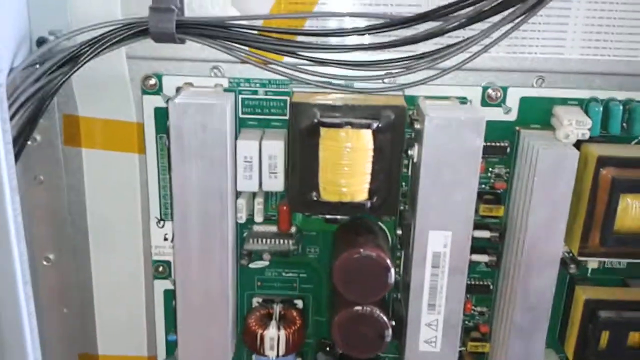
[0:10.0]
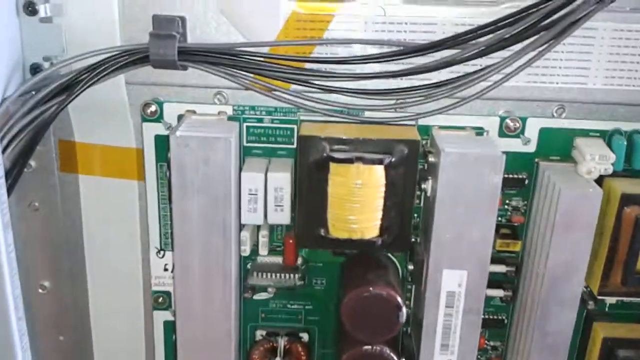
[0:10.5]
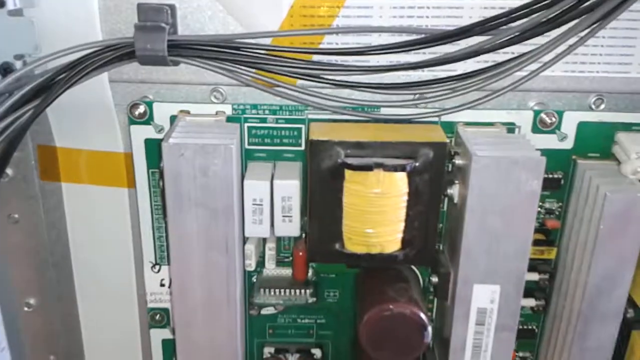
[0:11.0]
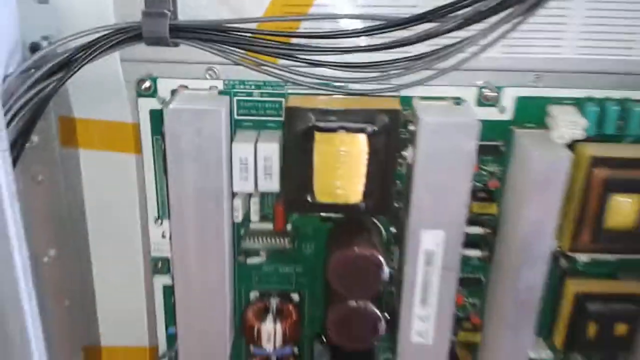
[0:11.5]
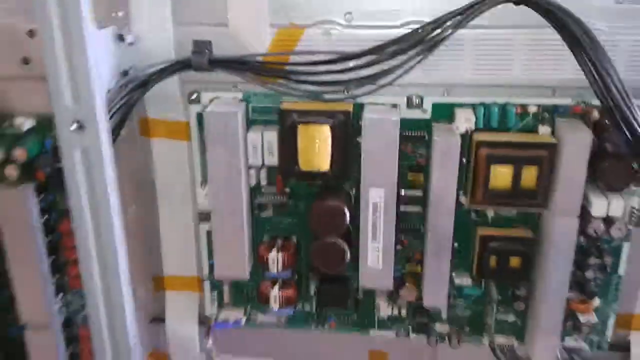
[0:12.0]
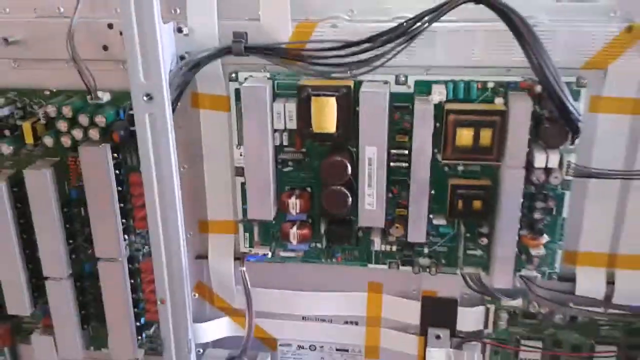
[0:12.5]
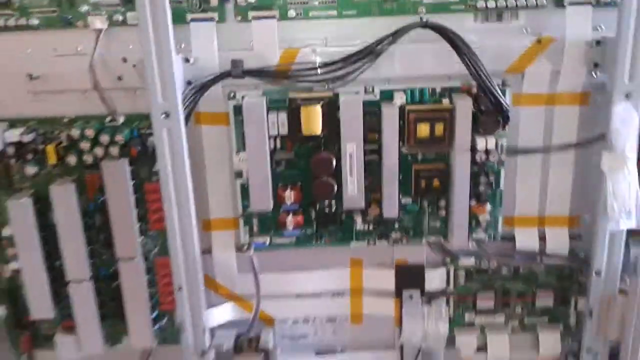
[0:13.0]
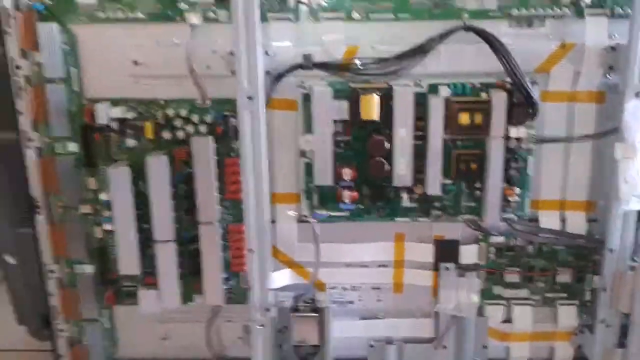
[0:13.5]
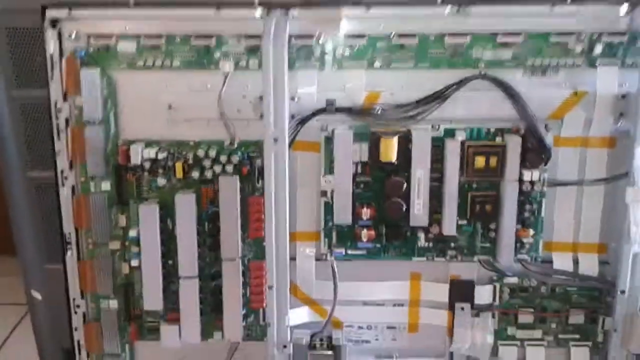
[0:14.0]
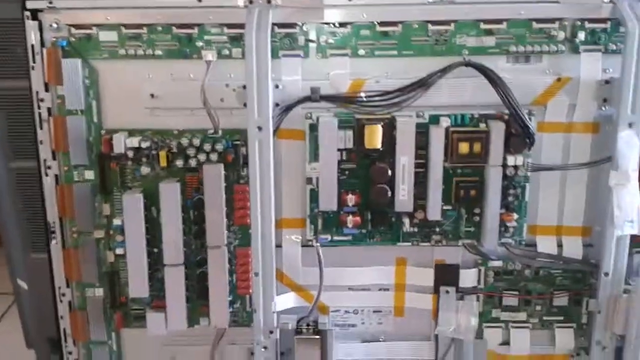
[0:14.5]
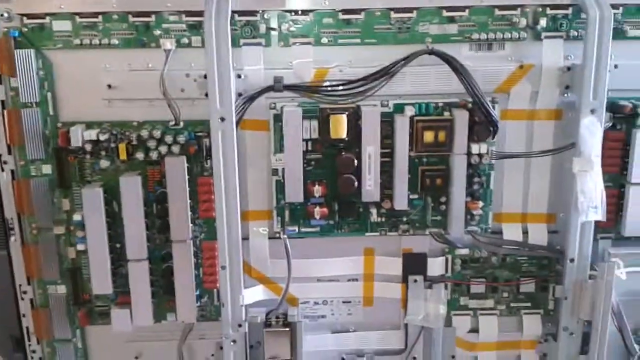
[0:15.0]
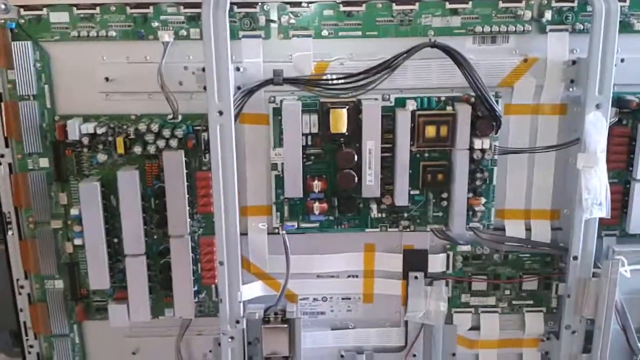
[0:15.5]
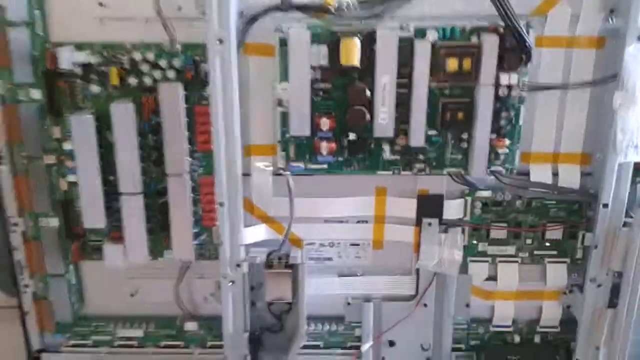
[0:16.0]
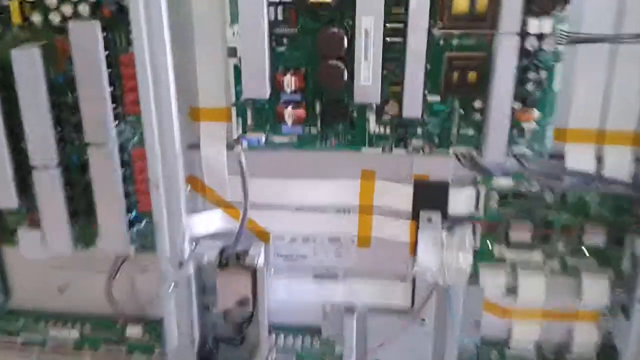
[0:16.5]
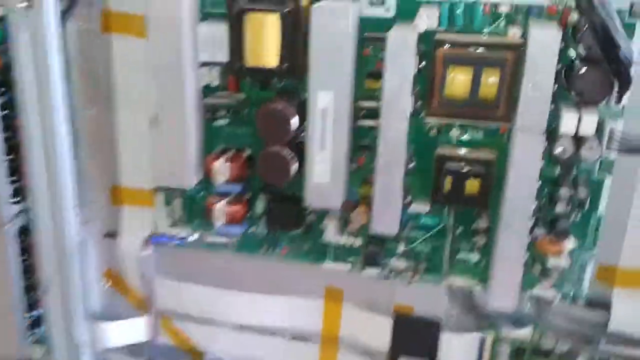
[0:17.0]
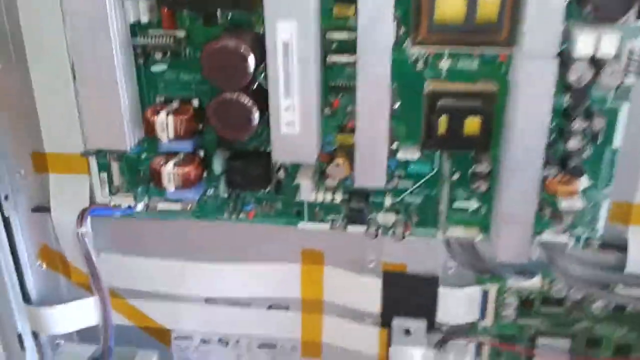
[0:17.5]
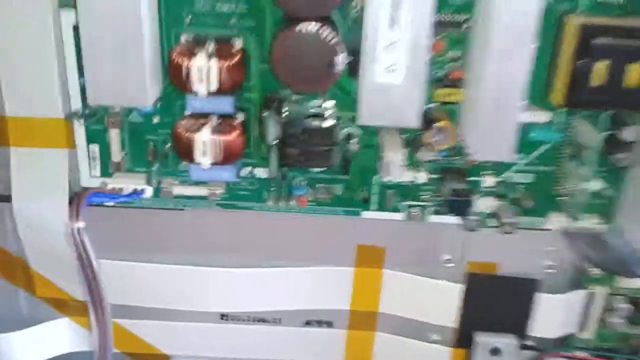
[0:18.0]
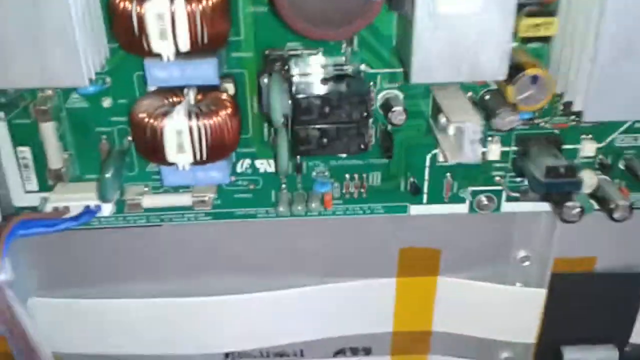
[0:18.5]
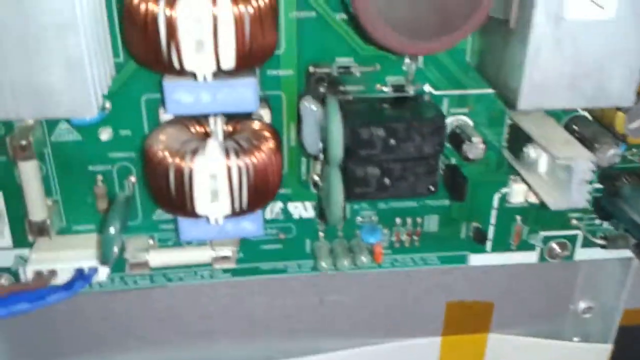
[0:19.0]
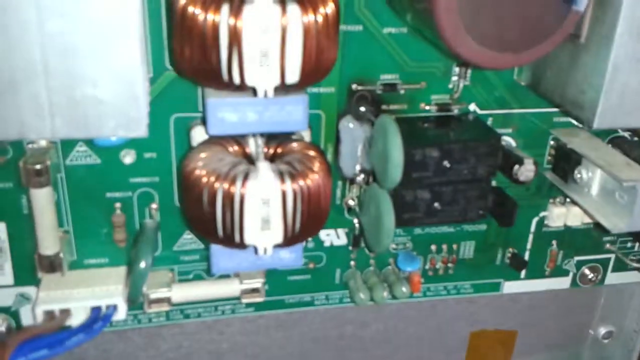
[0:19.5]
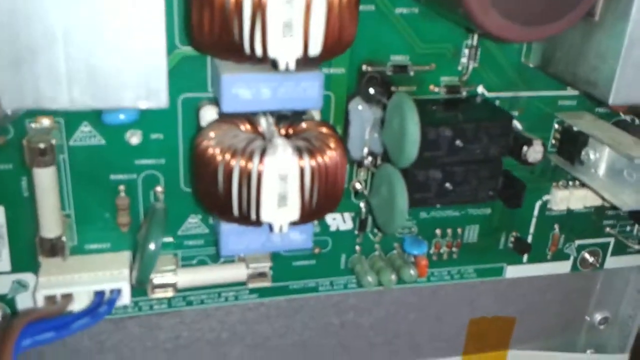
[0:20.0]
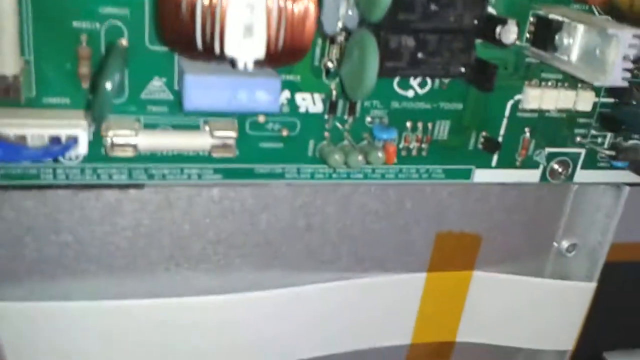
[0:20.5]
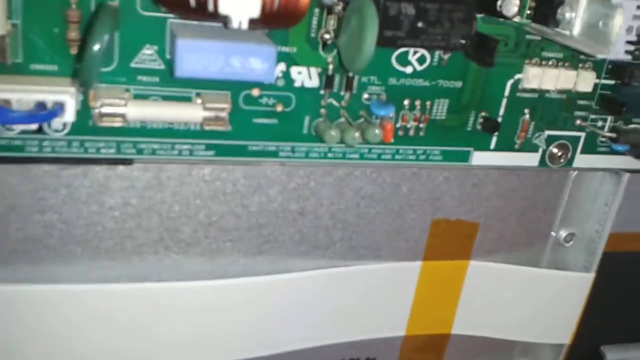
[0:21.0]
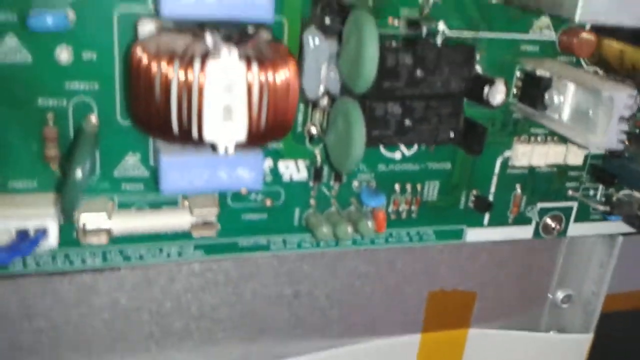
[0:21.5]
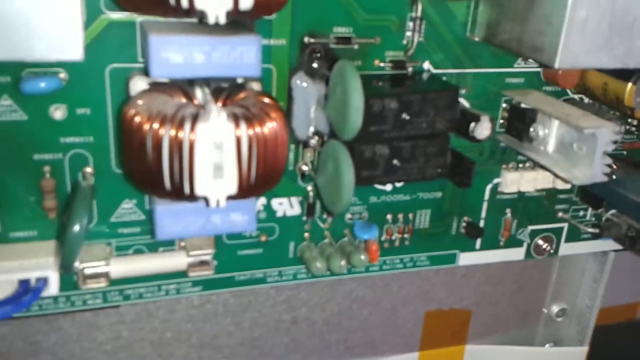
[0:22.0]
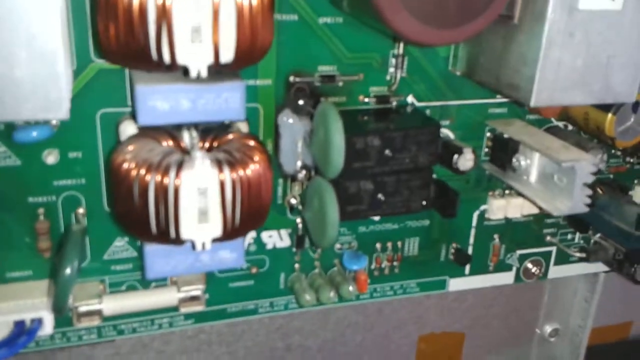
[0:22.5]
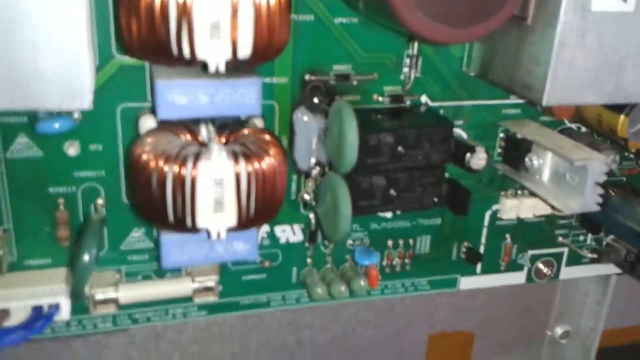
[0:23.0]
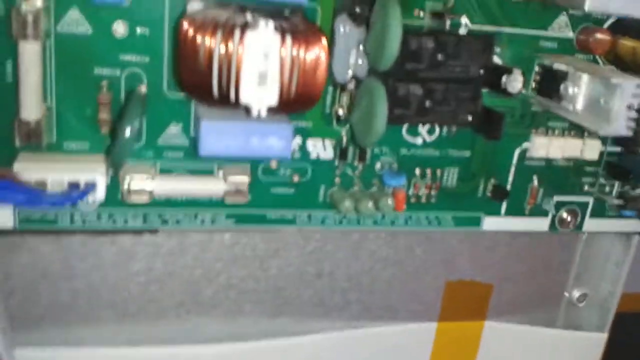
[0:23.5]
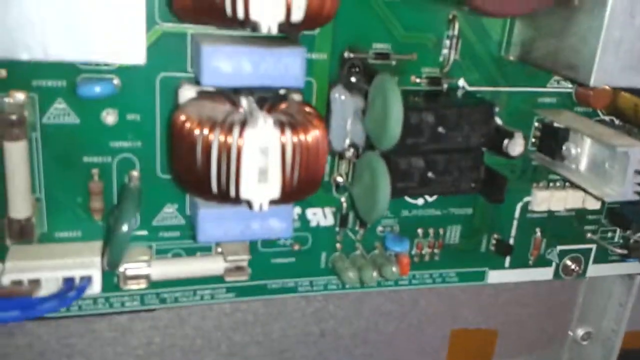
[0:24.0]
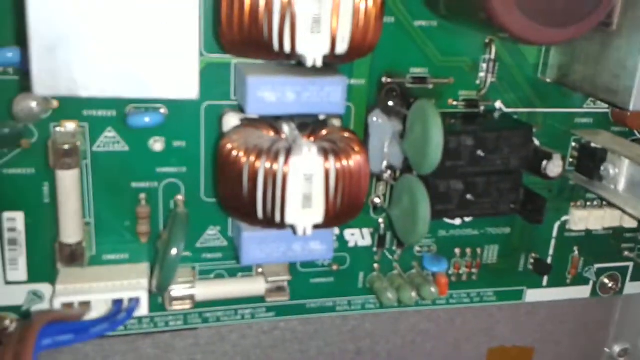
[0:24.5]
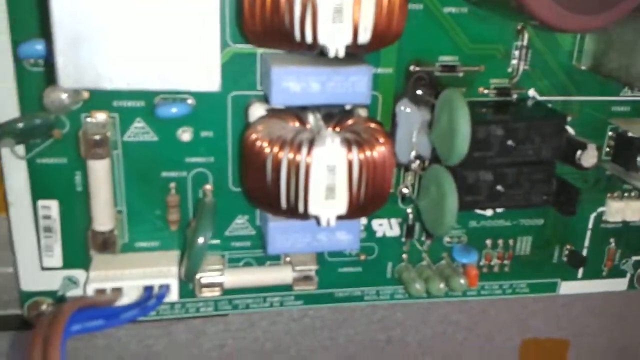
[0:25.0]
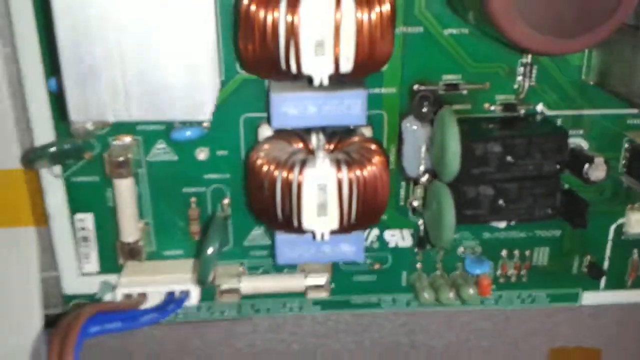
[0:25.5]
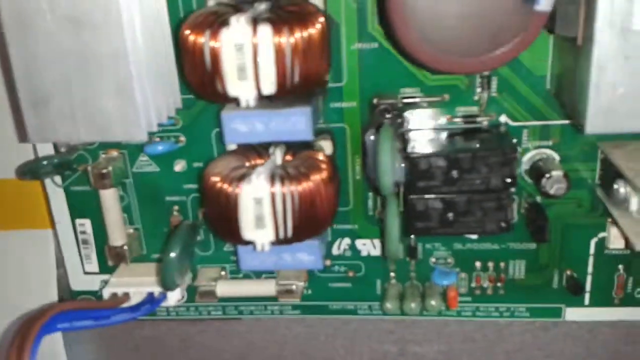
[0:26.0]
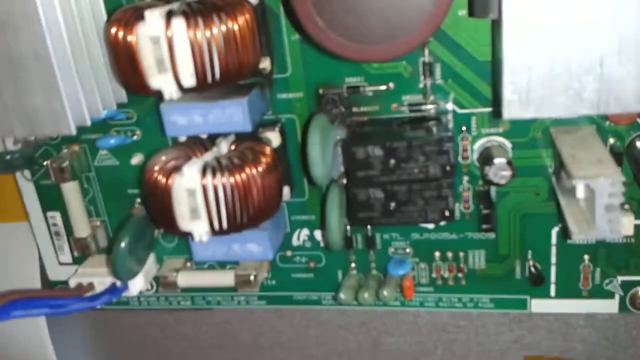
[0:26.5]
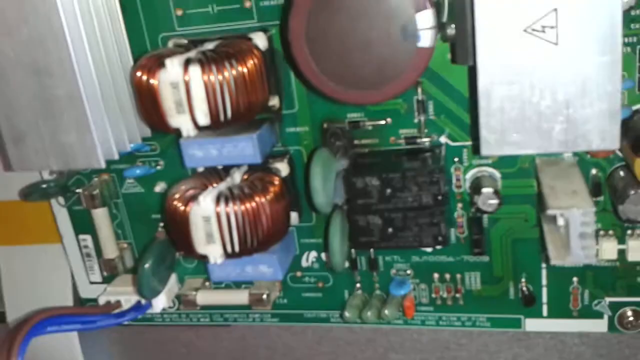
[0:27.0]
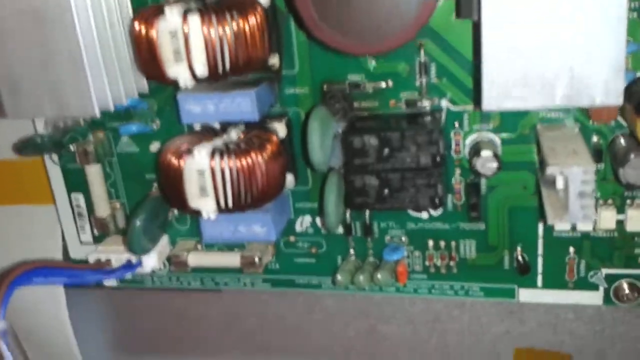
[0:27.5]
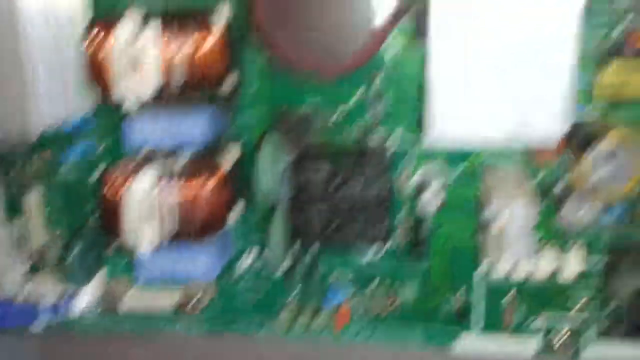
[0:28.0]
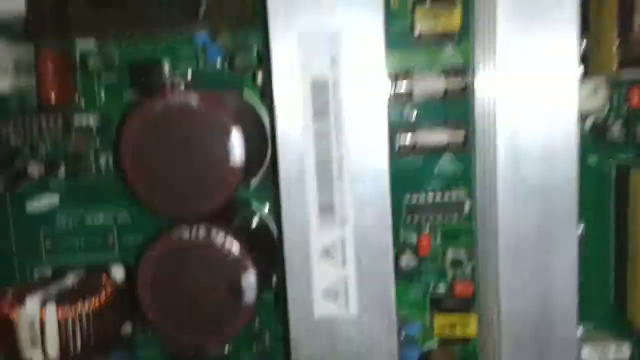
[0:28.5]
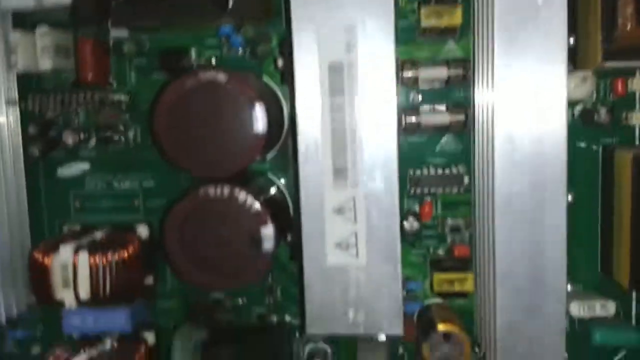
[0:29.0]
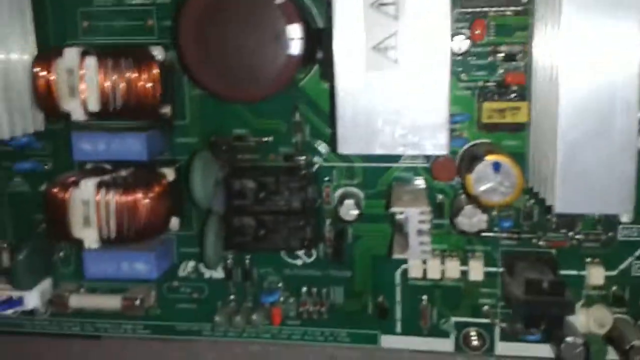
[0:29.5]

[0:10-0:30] A close-up shows an 18 by 18 inch circuit board with different colored resistors, capacitors and diodes. There are two transistors with copper-colored coil wrapped around them, a few integrated circuits, inductors, and two black relay switches with yellow in the middle. Wiring comes from the right side of the circuit board and goes up above it. The camera then pans out to show a larger white panel containing different circuit boards, with another circuit board to the left of this one. Close-ups of the capacitors, diodes and resistors follow, and then he zooms in on the transistors and blue diodes, showing the wrapped copper up close.